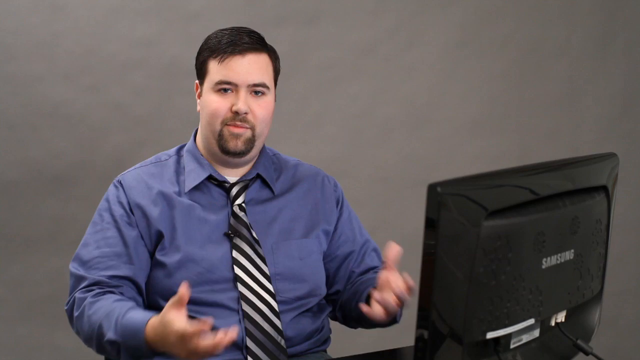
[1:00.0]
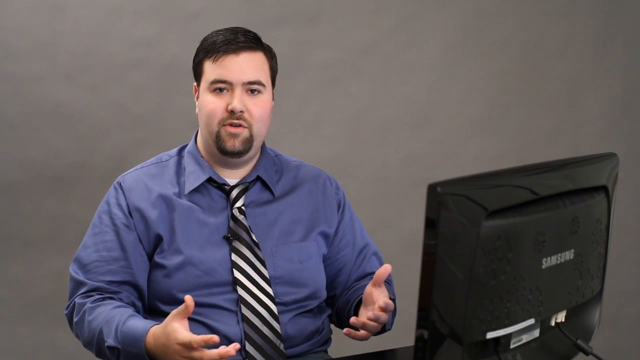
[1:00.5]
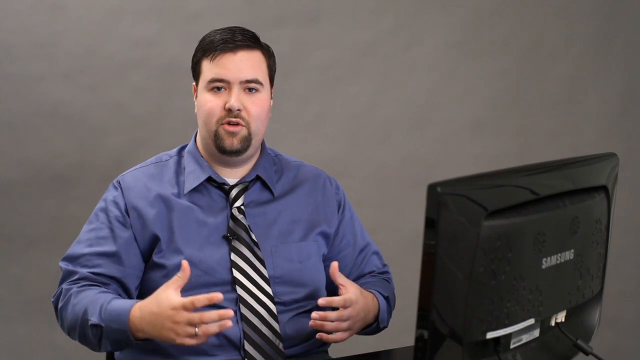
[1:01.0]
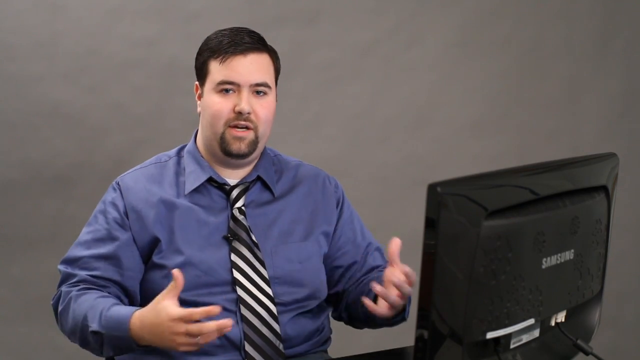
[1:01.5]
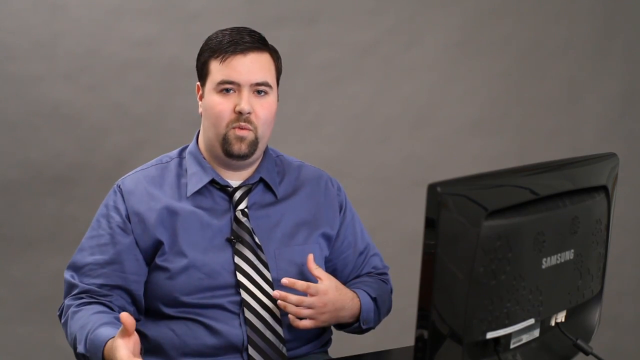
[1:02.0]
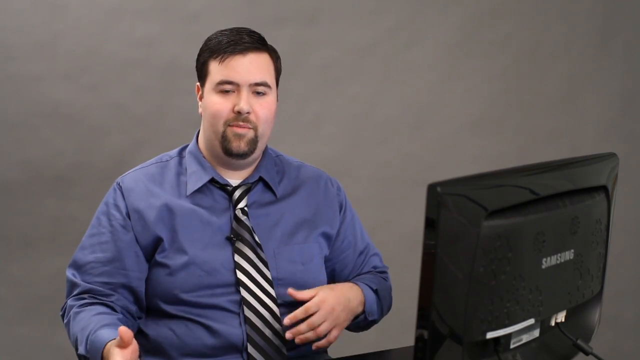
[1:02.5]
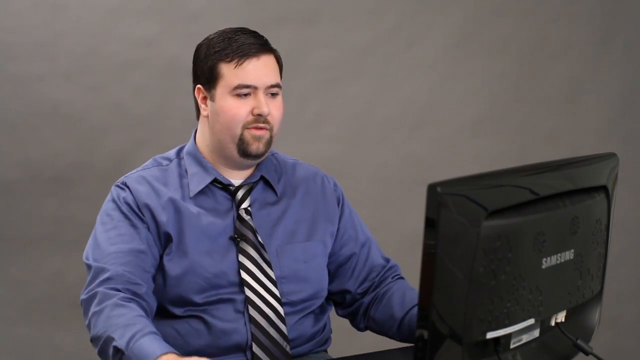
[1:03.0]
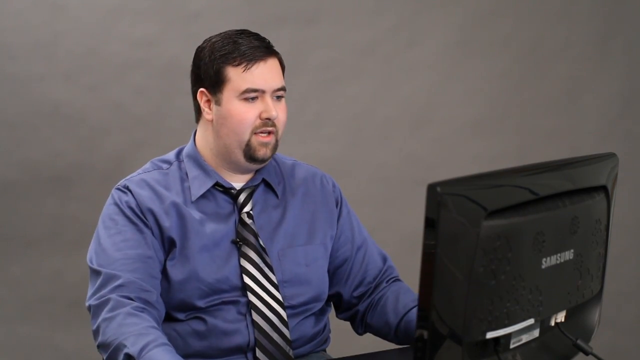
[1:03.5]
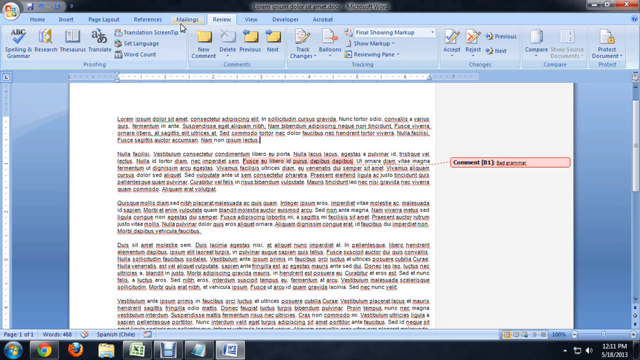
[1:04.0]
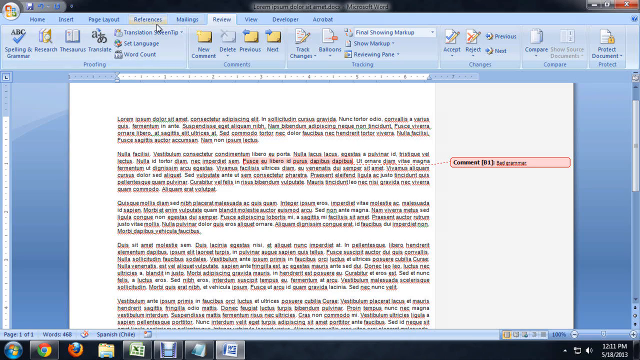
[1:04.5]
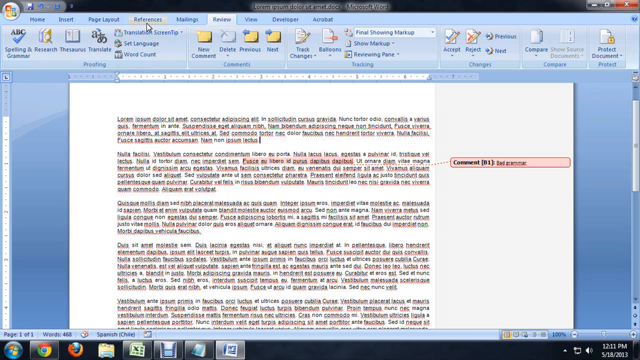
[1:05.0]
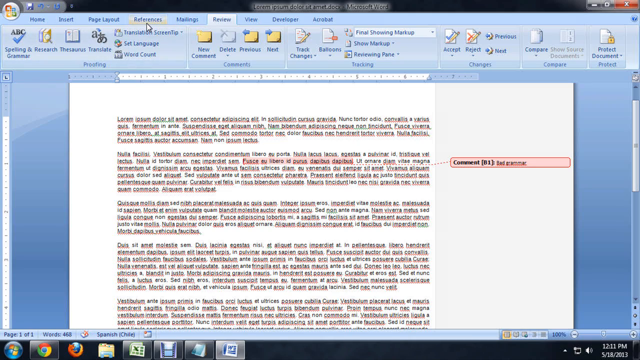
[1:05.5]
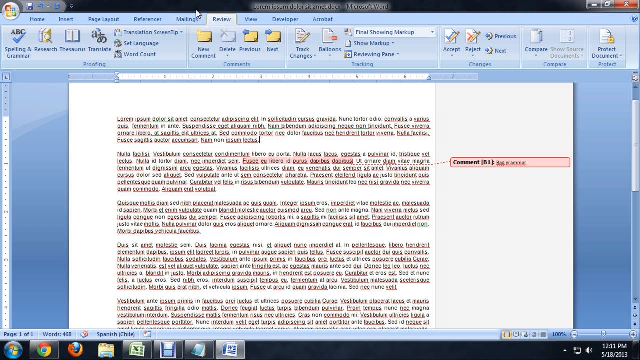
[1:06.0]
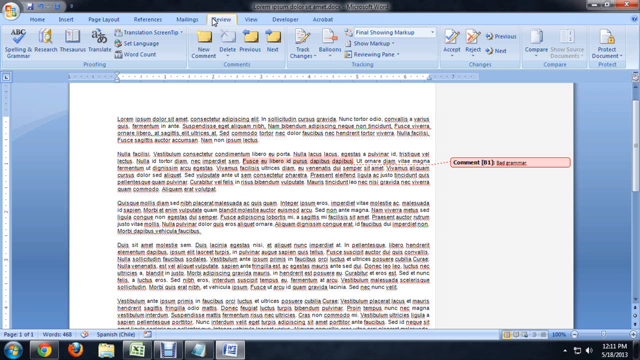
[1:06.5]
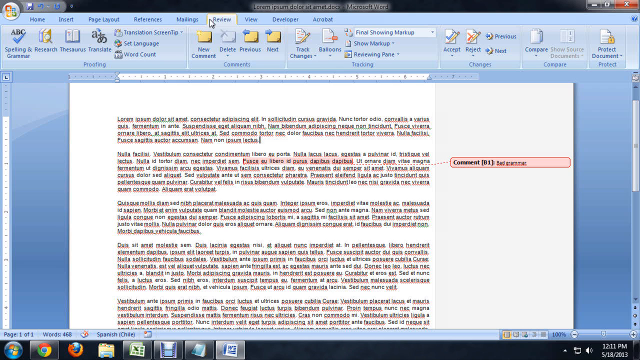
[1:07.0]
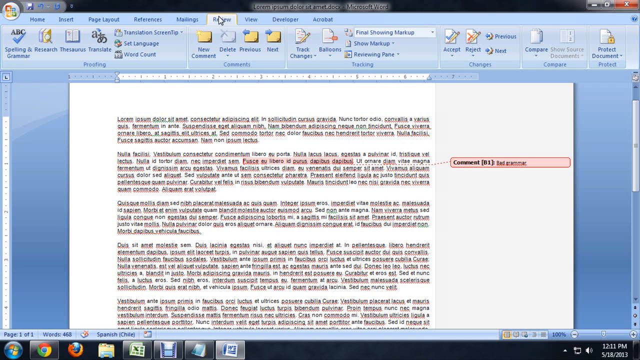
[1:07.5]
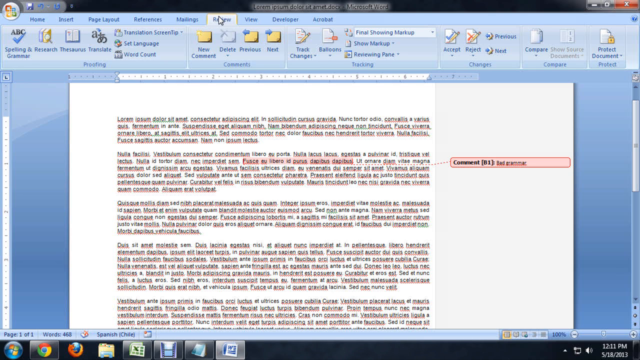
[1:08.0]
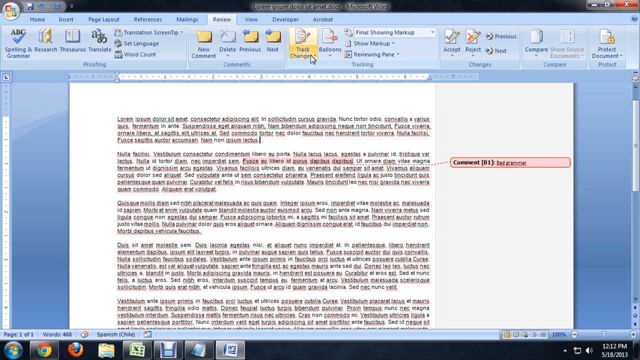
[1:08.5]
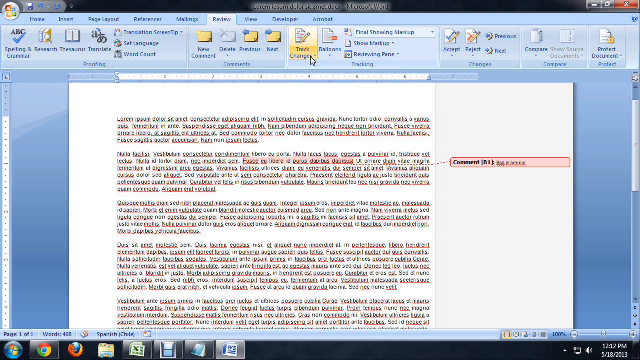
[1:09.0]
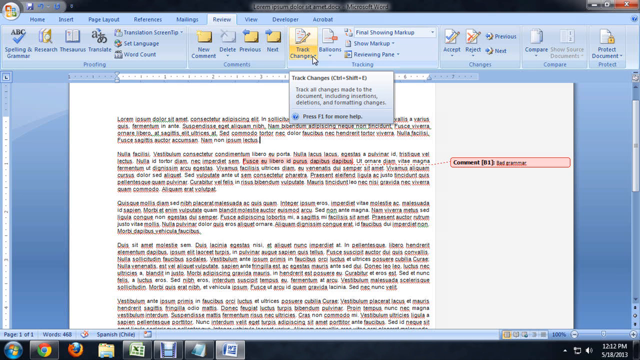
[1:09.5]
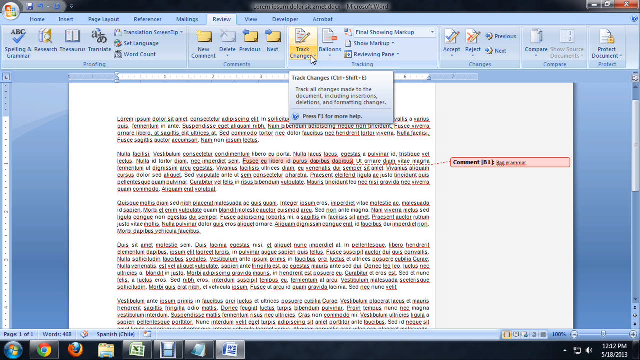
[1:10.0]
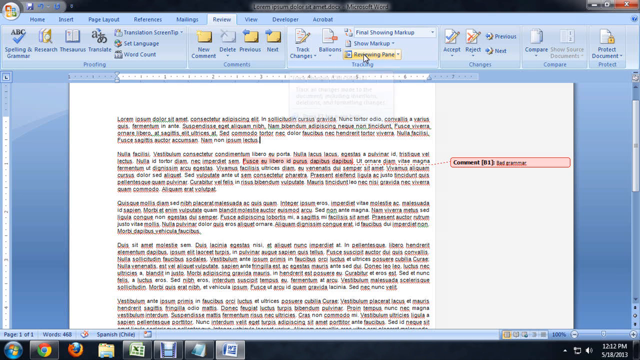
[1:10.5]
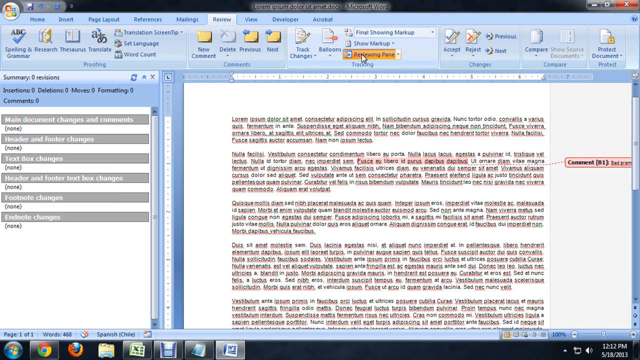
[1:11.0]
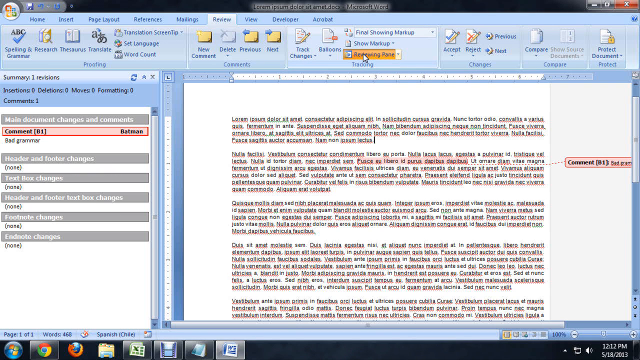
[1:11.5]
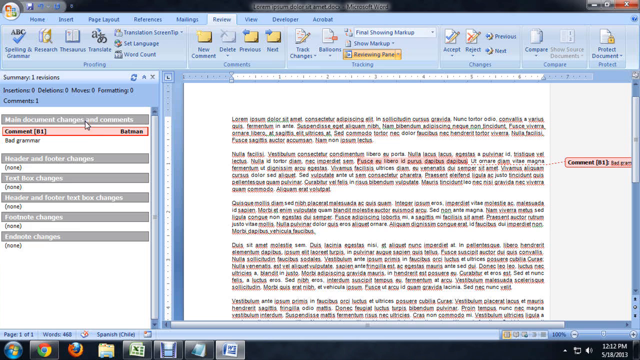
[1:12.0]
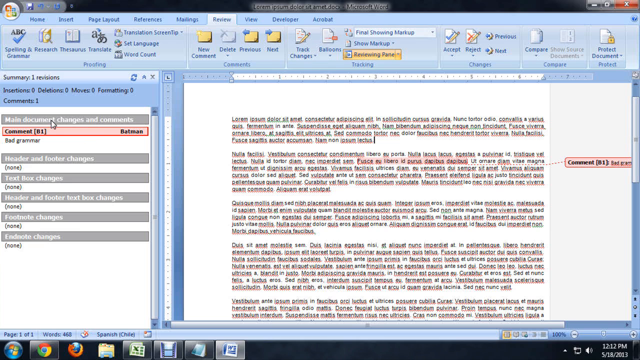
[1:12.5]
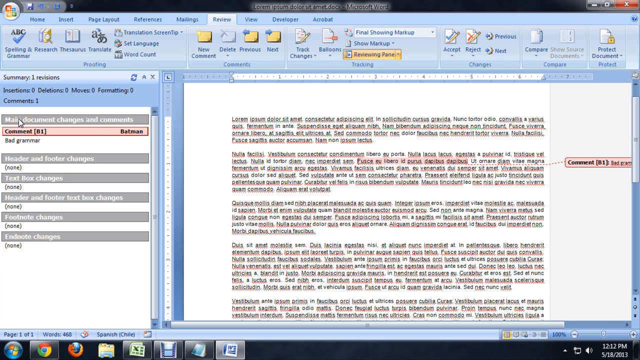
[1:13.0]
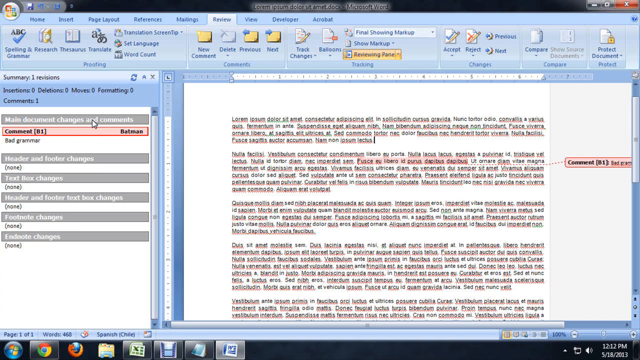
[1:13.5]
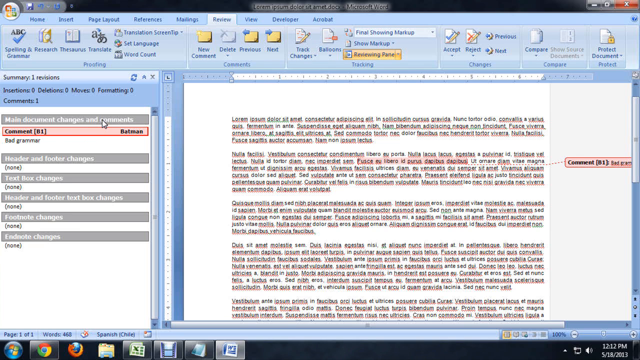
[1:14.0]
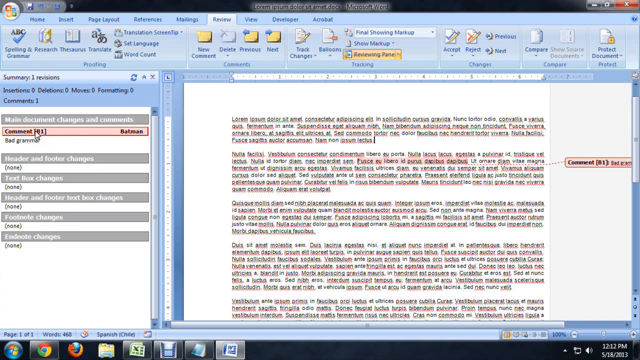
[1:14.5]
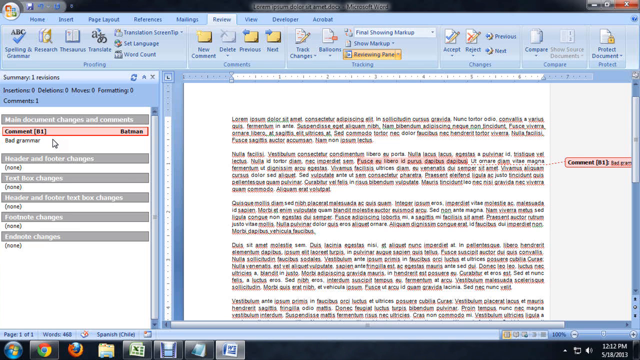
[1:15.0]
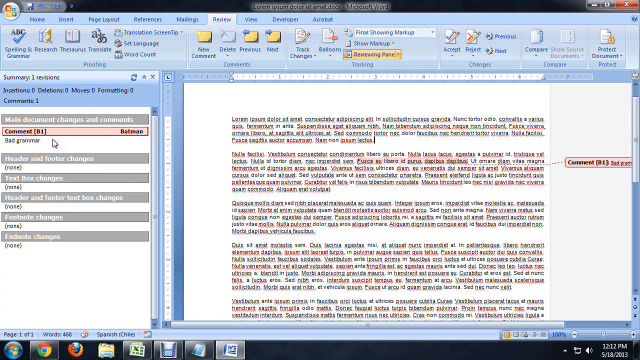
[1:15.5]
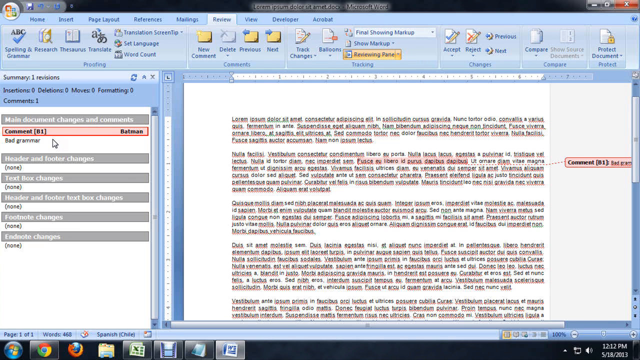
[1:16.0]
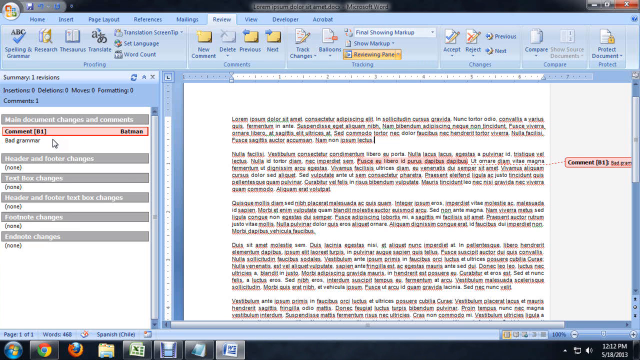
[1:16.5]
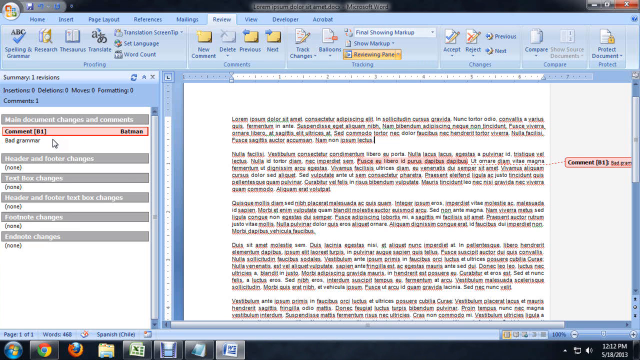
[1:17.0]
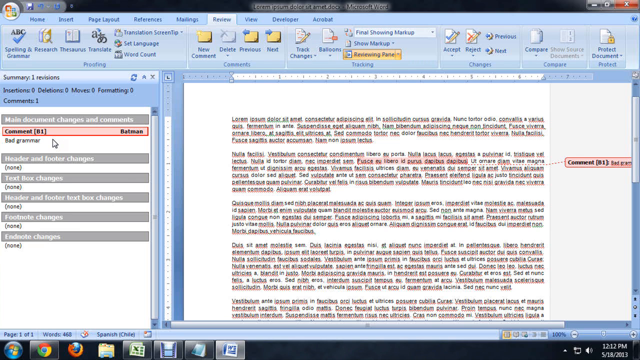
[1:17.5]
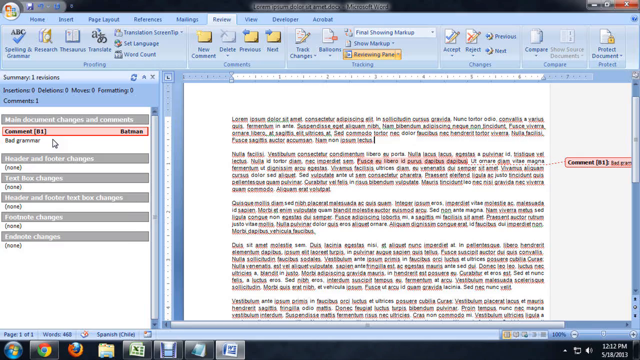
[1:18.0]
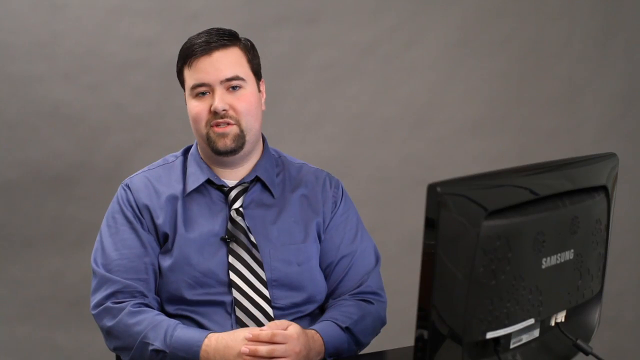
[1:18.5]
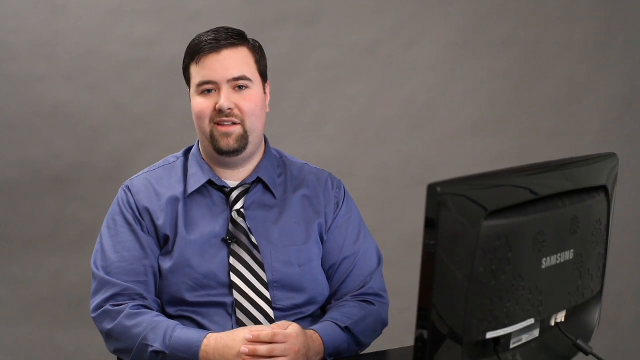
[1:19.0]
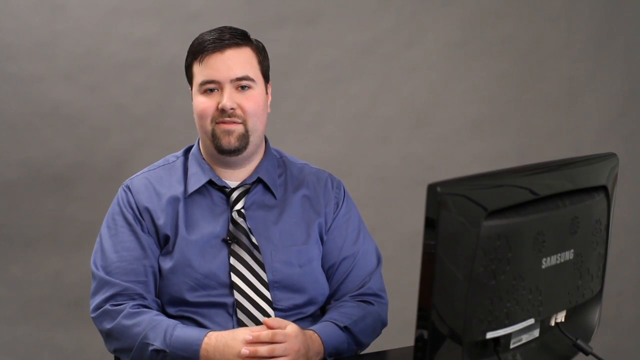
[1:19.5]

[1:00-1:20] He sort of moves his hand around in two sweeping motions, then looks back at his Samsung computer monitor, which has a black case. Back in the Word document, he hovers over References and then over Review without clicking anything, then hovers over the Track Changes button and over Reviewing Pane. He clicks Reviewing Pane, and a panel opens on the left titled "summary one revision" with about six lines. One line reads "main document changes and comments," the next reads "header and footer changes," followed by "text boxes changes," down to the bottom line, "end note changes." Only the main document changes section has a comment, which says "bad grammar." The video then pans back to him talking in front of the camera.